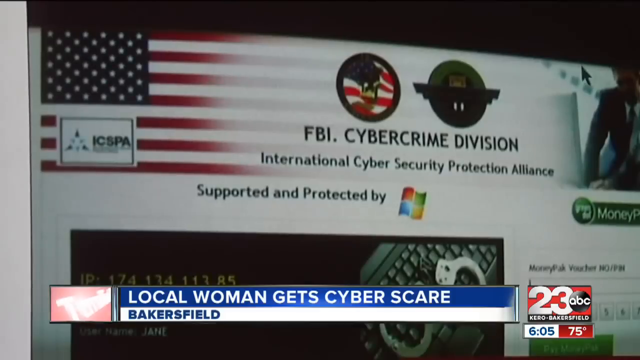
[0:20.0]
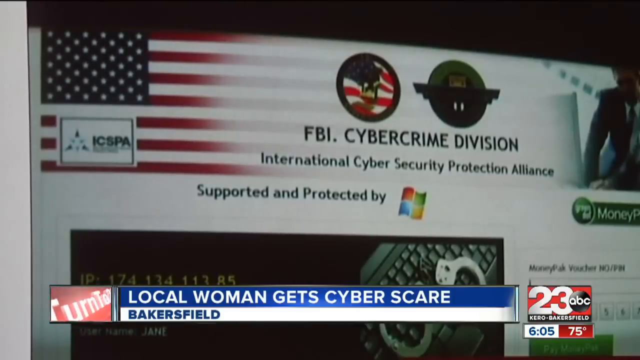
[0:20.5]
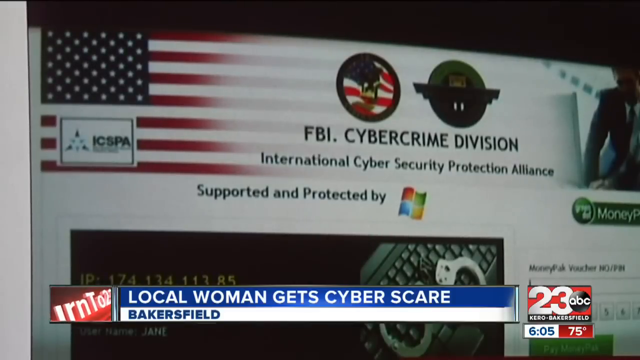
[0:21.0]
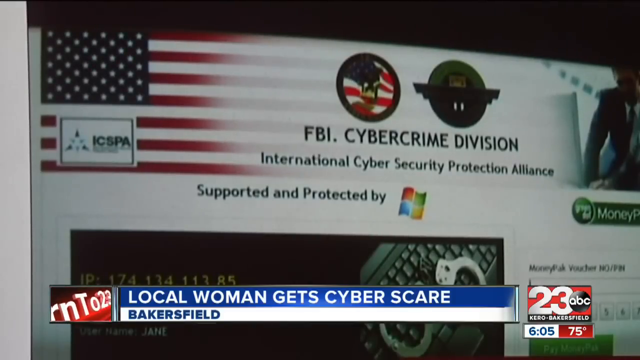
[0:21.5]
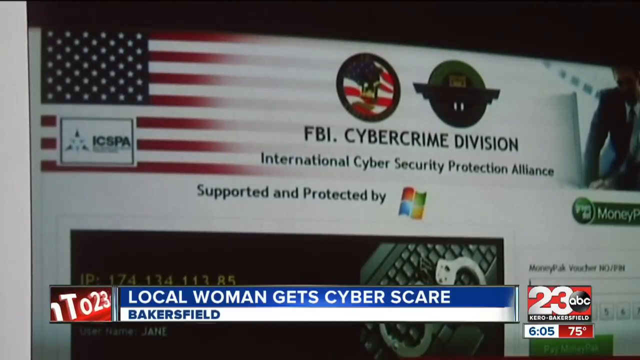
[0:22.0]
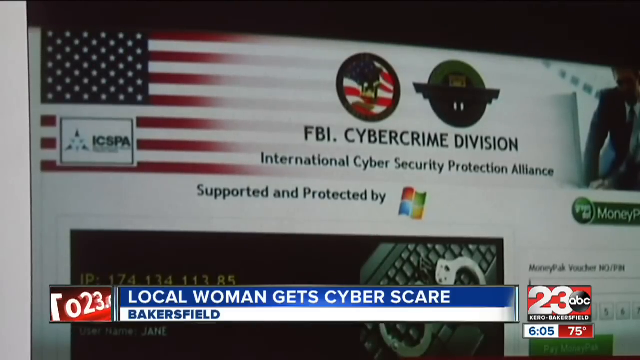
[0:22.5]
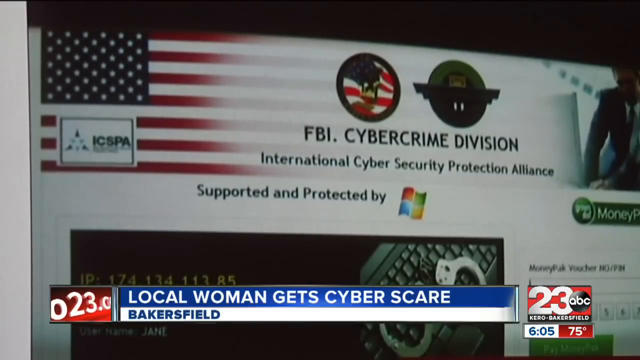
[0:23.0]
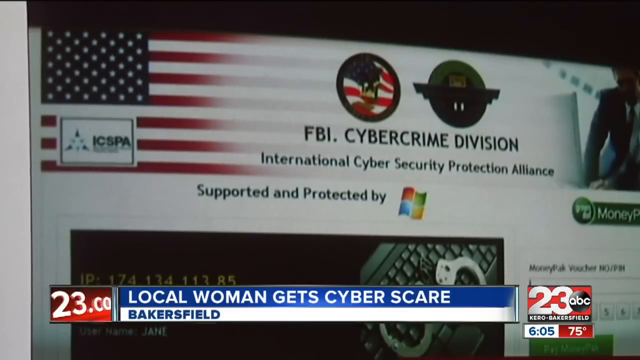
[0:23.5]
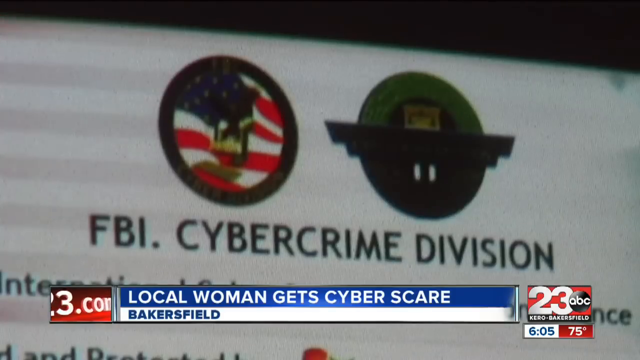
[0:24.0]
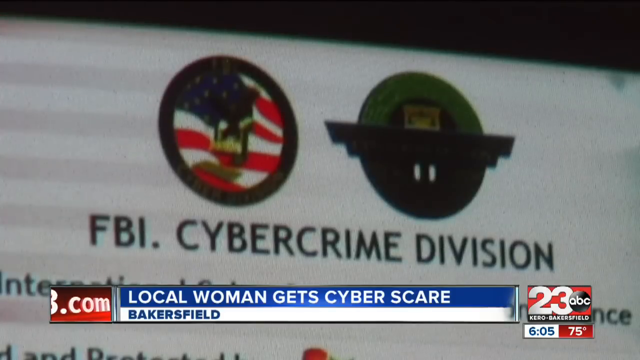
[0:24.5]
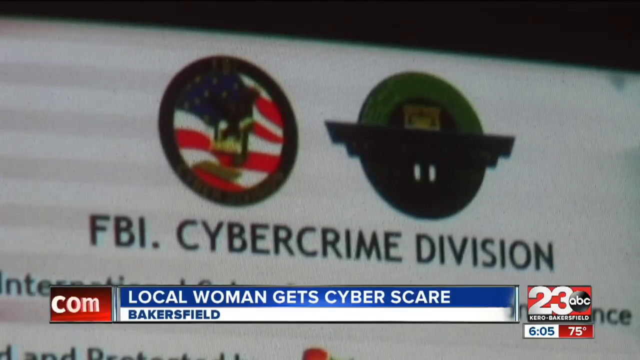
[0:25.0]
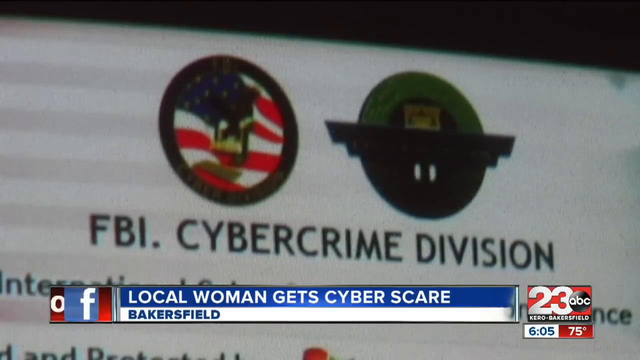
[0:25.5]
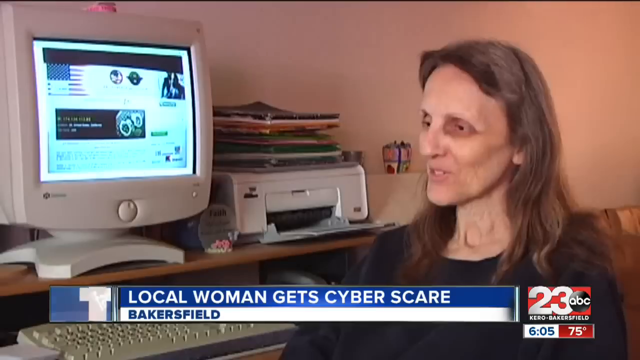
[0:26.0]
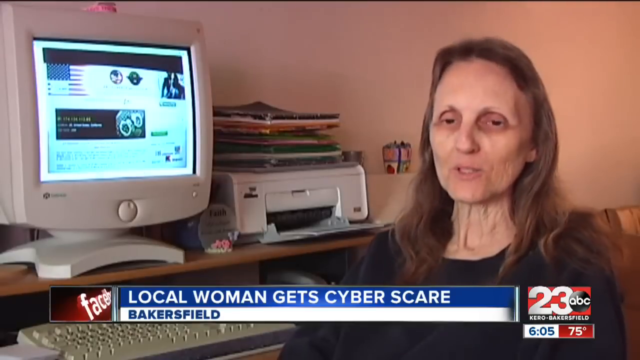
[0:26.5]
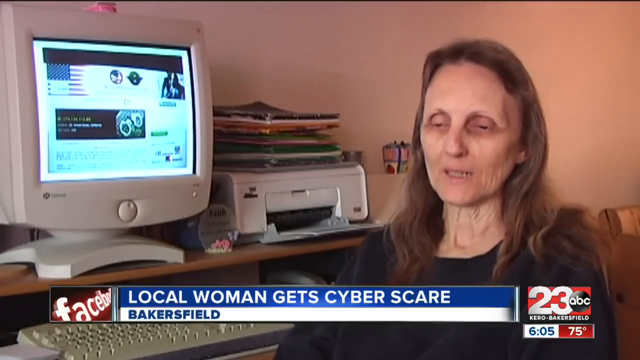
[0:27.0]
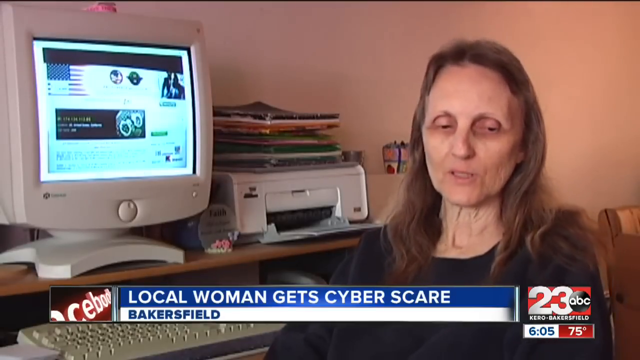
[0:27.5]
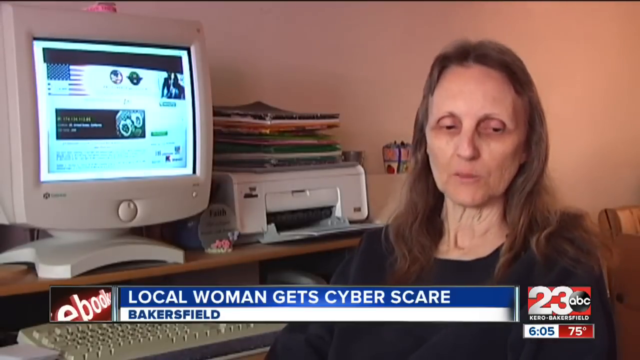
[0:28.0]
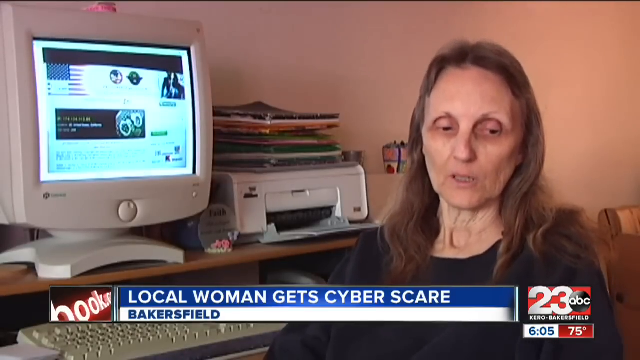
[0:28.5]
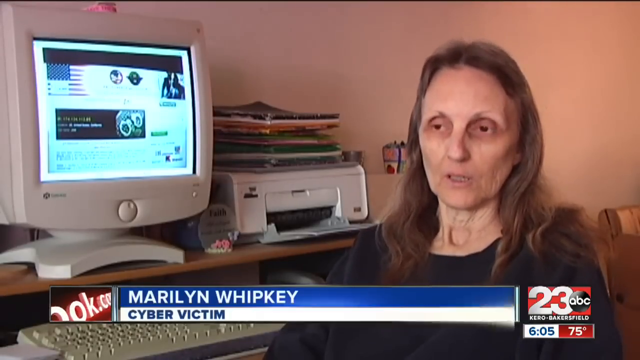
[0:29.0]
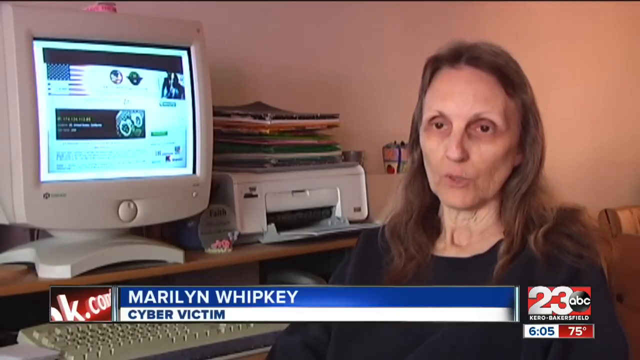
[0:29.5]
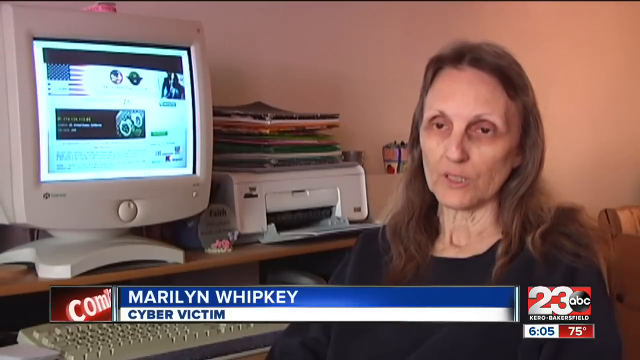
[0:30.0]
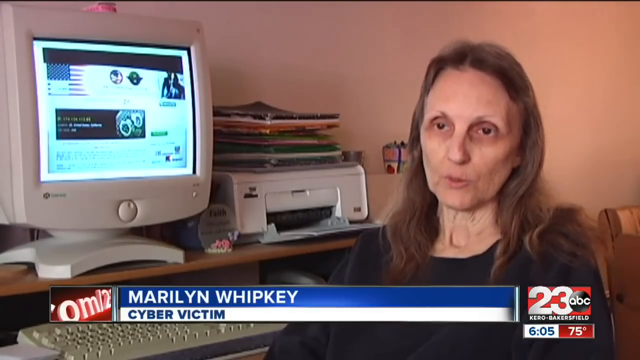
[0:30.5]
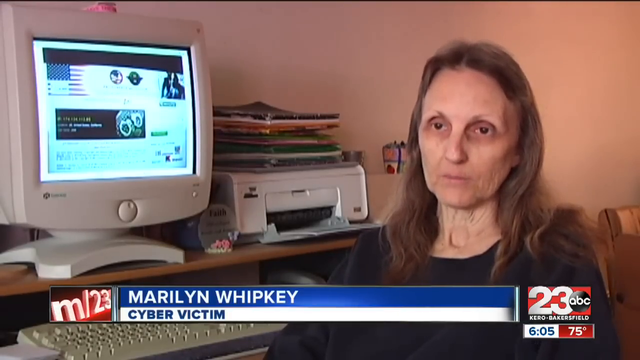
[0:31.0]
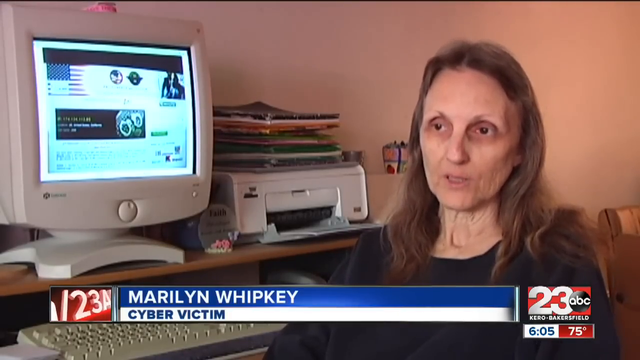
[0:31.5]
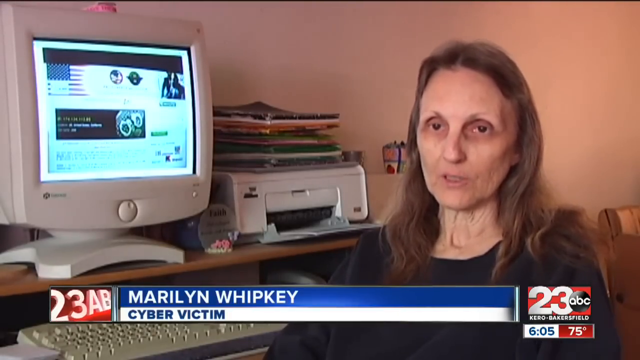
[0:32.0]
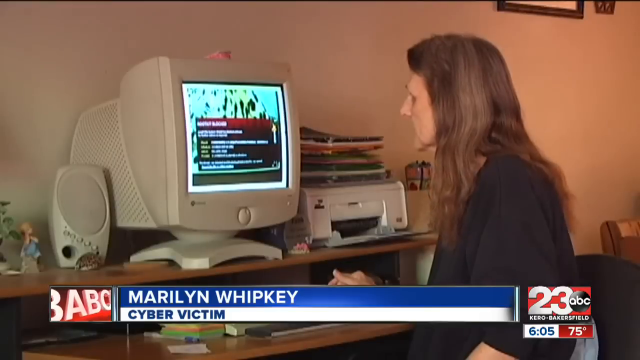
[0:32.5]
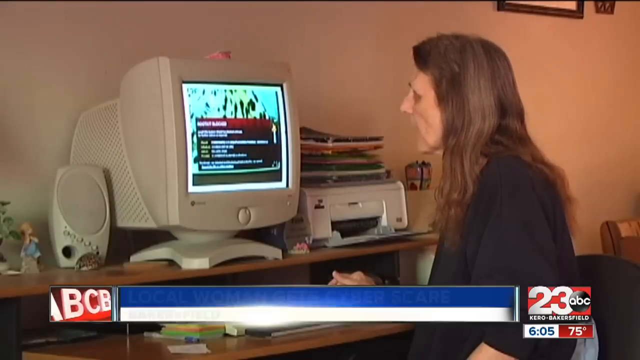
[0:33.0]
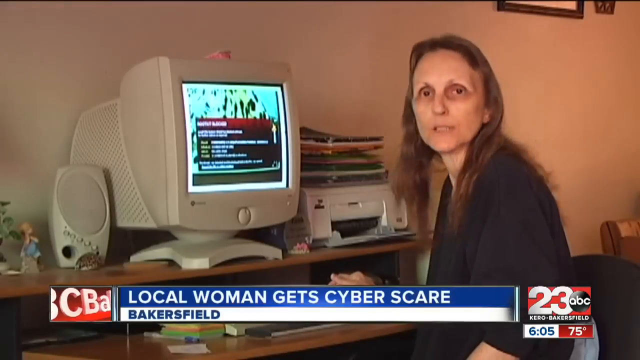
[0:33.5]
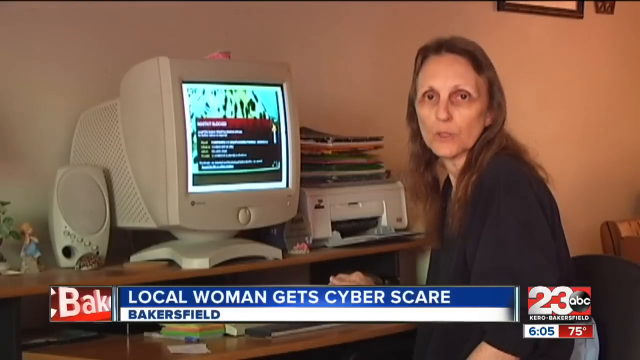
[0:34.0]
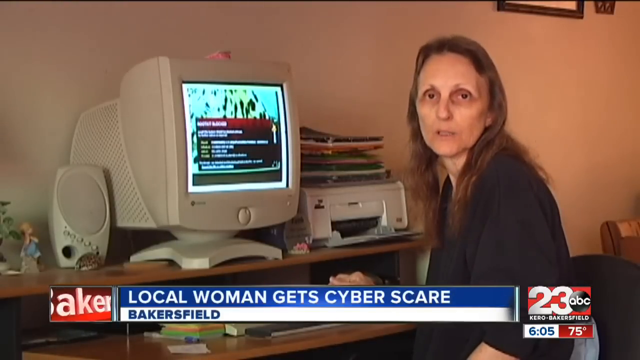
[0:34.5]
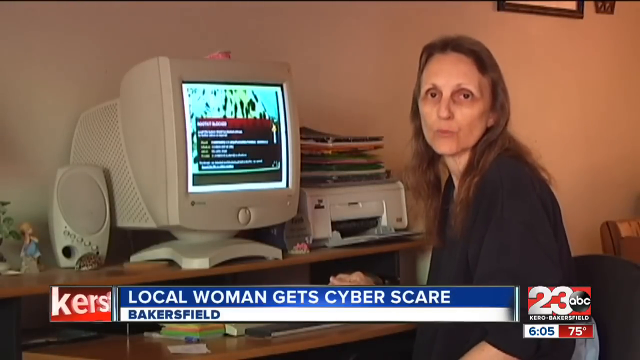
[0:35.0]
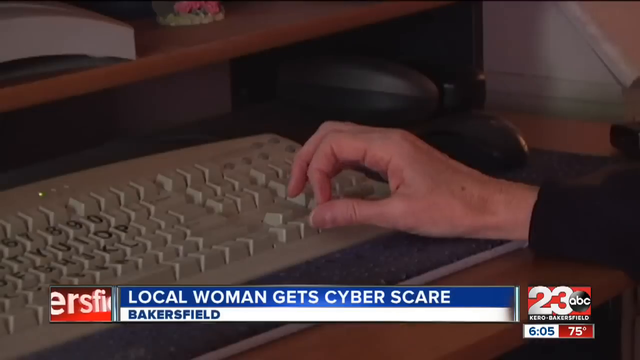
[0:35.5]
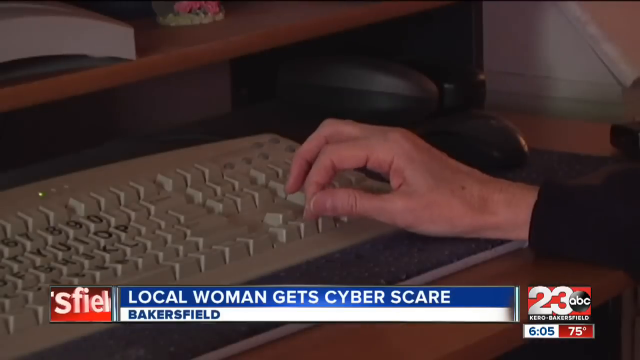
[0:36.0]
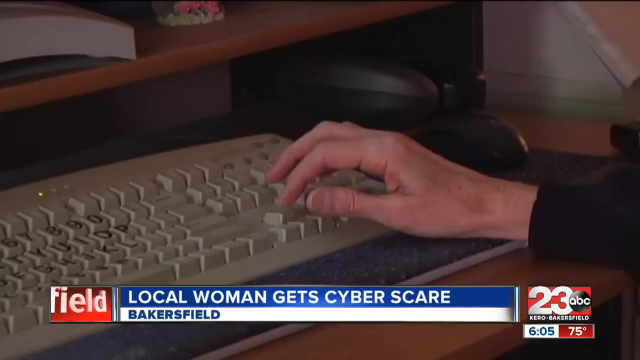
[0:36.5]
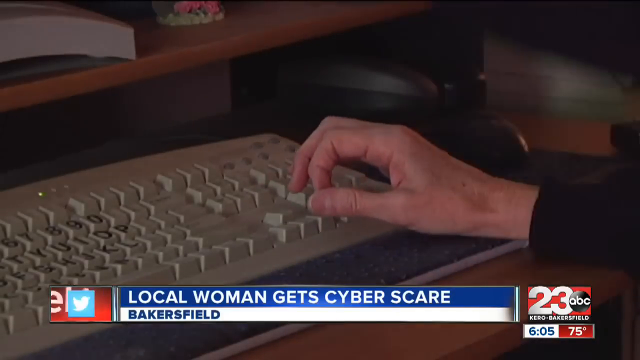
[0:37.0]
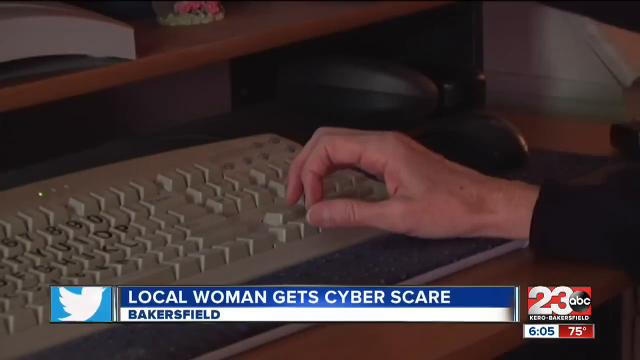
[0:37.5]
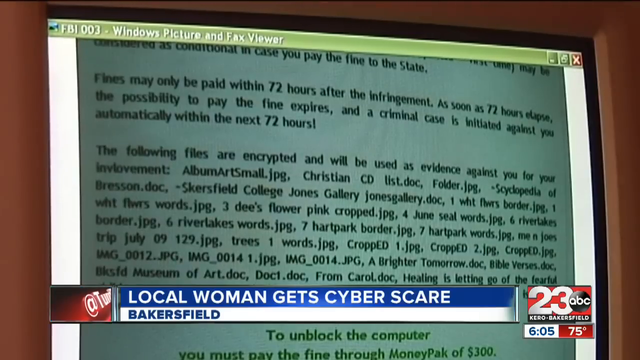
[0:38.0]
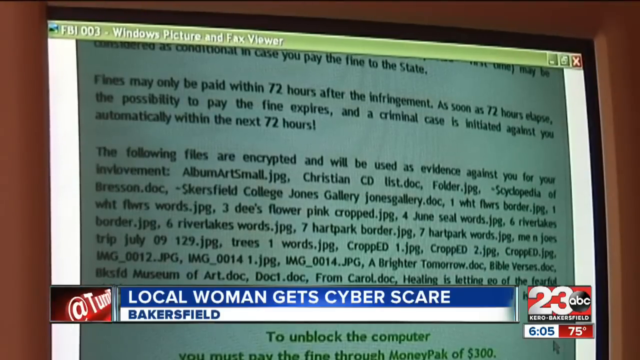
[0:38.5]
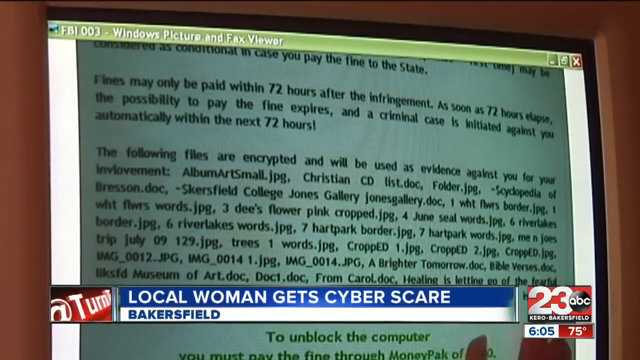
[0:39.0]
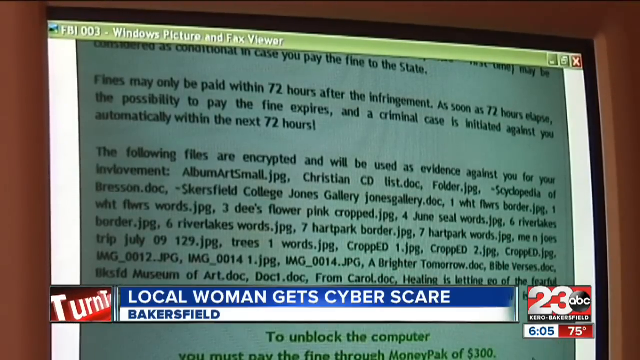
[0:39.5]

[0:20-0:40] The ABC channel 23 Kero Bakersfield watermark is in the bottom right-hand corner of the screen: a white 23 on a red background, with the ABC logo, a black sphere with white letters, to the right, and "Kero Bakersfield" underneath. Below that, the time reads 6:05, and to the right the temperature is 75 degrees. The headline reads "Local woman gets cyber scare," with "Bakersfield" underneath. A website is pulled up, showing "FBI Cybercrime Division," below that "International Cybersecurity Protection Alliance," and below that "Supported and protected by" with the Windows symbol. In the left corner there is an American flag, and underneath it a small box reading "ISSPA."